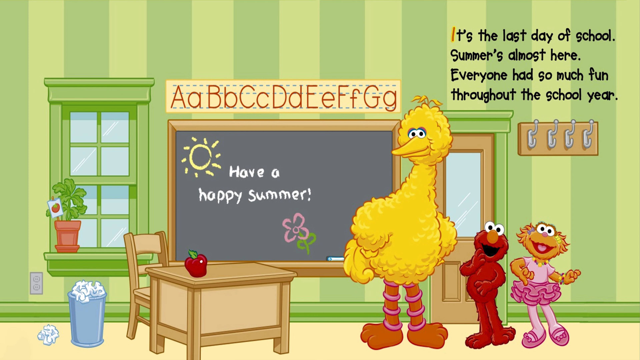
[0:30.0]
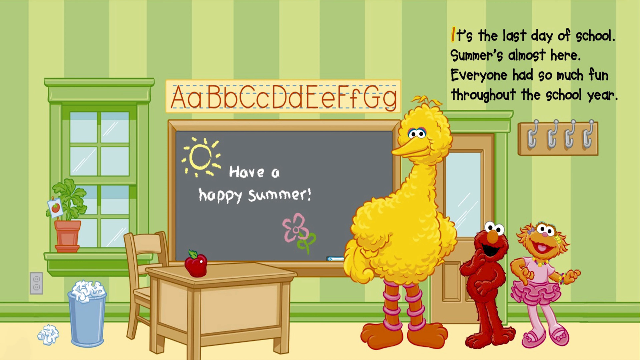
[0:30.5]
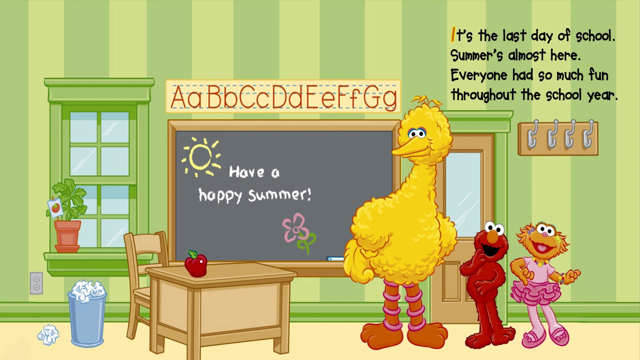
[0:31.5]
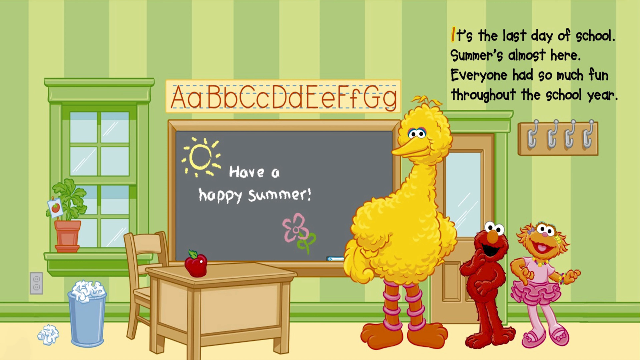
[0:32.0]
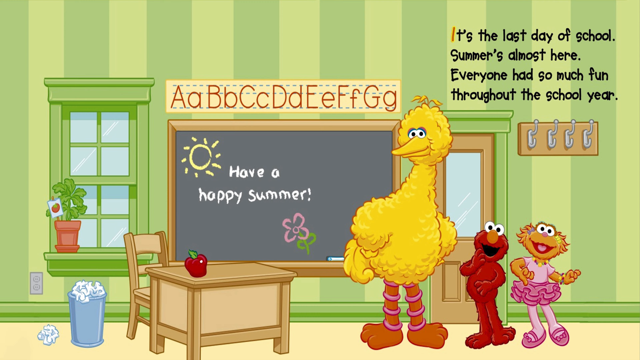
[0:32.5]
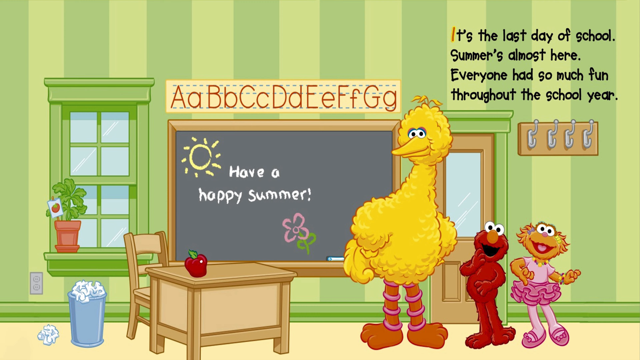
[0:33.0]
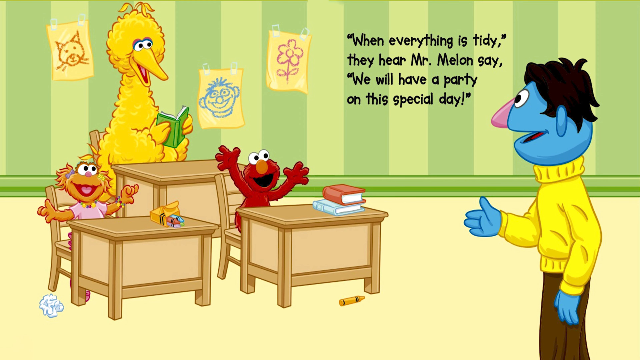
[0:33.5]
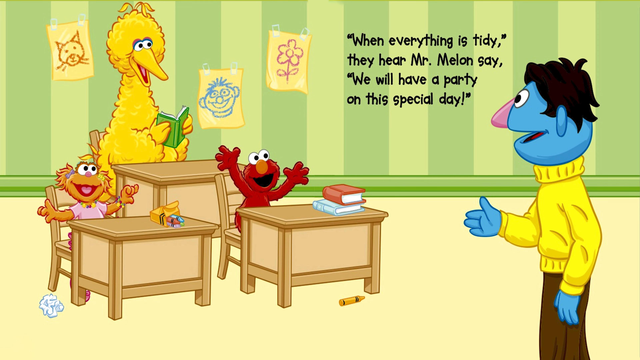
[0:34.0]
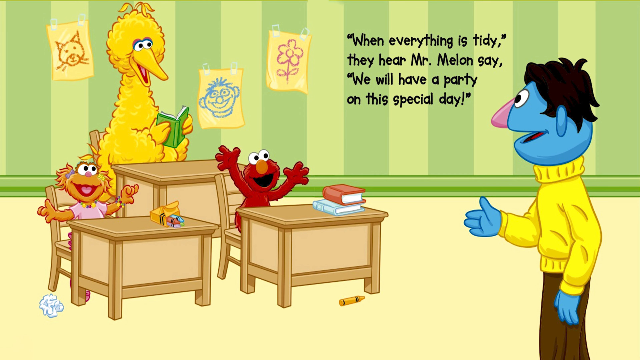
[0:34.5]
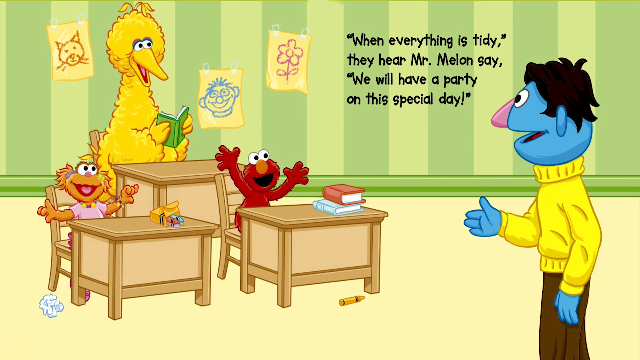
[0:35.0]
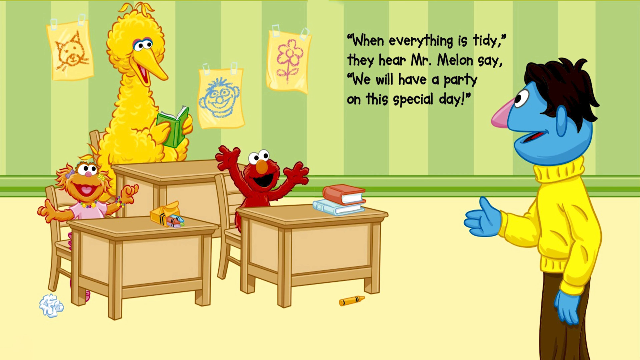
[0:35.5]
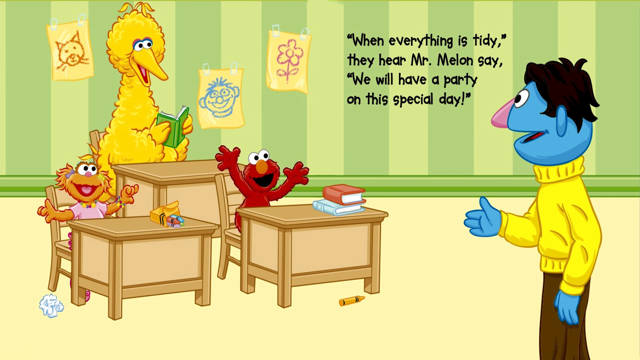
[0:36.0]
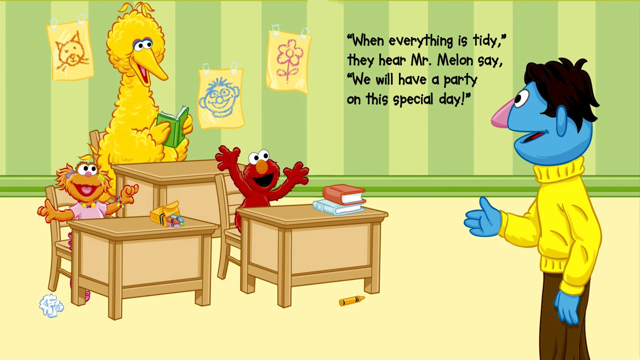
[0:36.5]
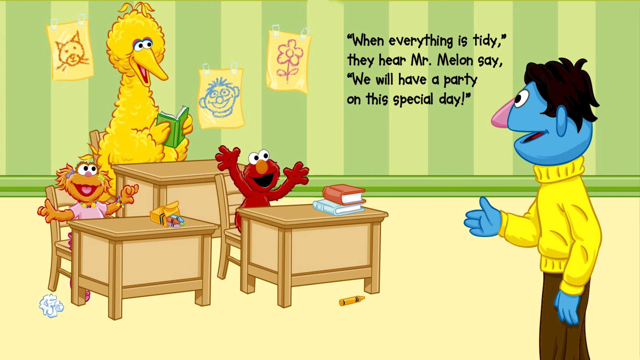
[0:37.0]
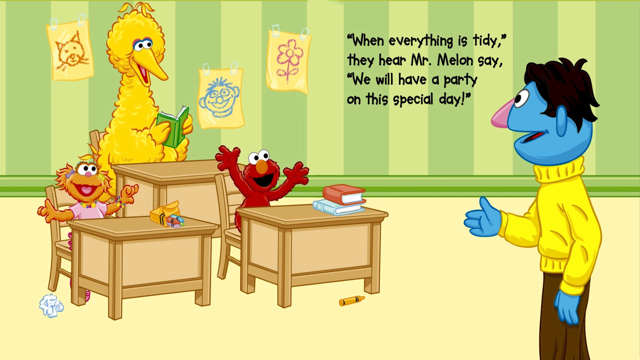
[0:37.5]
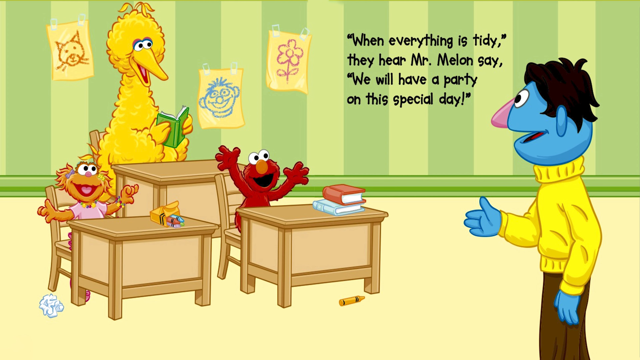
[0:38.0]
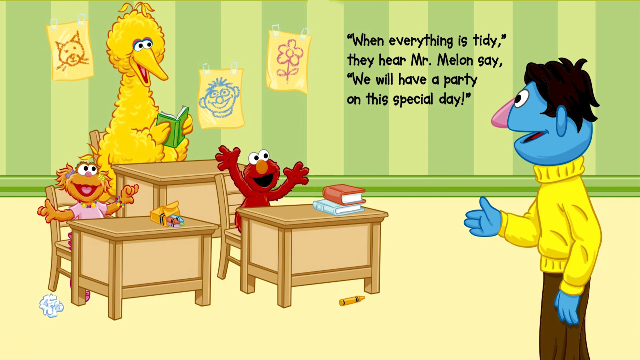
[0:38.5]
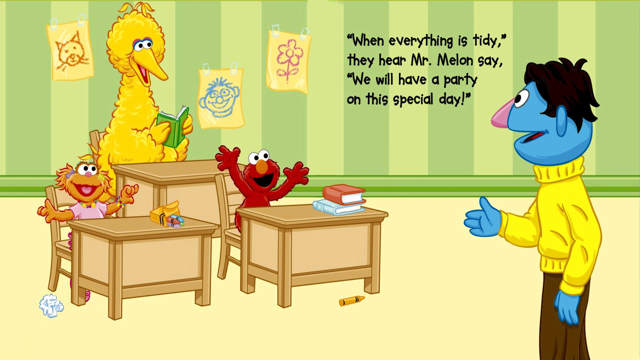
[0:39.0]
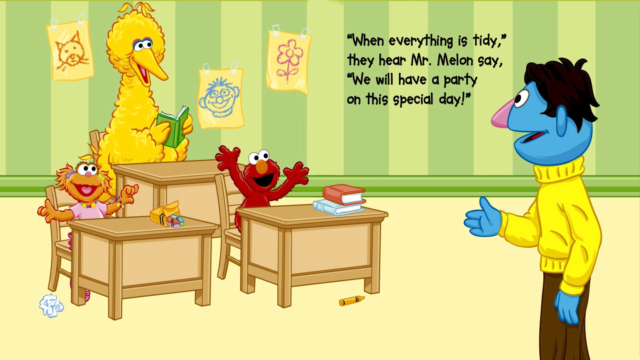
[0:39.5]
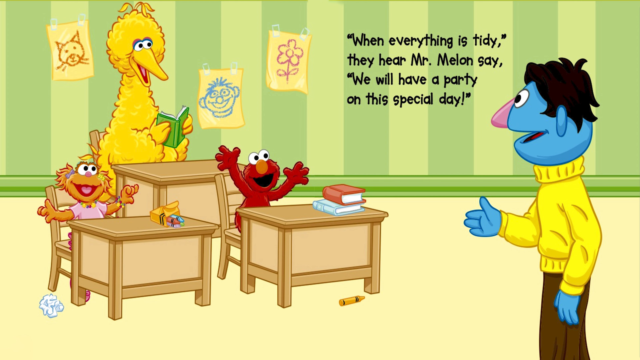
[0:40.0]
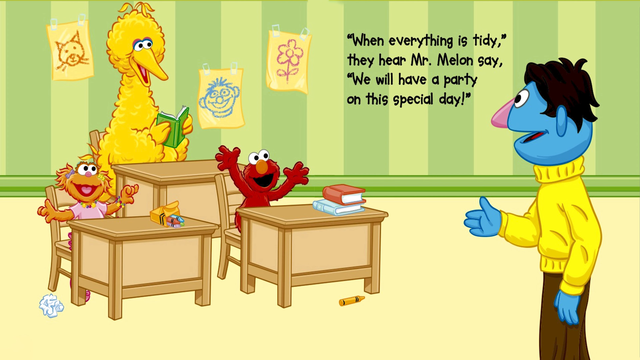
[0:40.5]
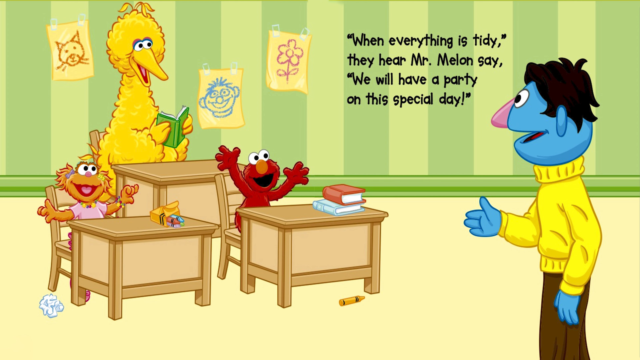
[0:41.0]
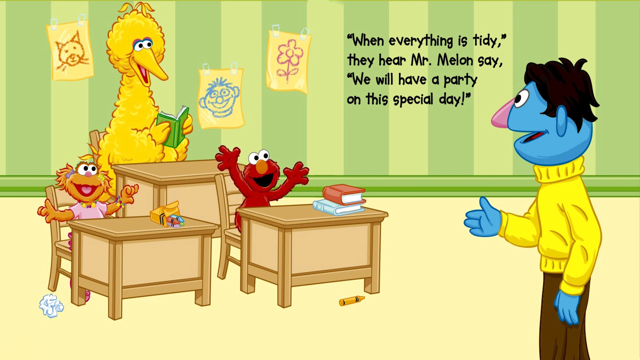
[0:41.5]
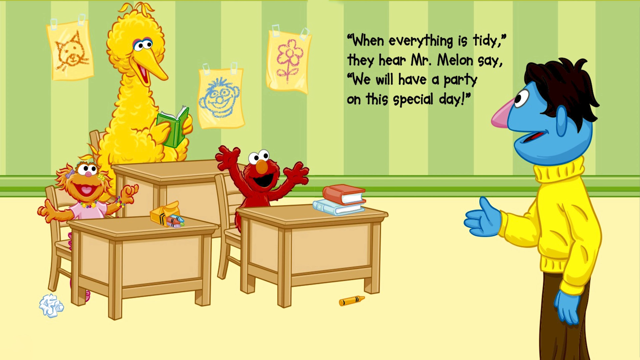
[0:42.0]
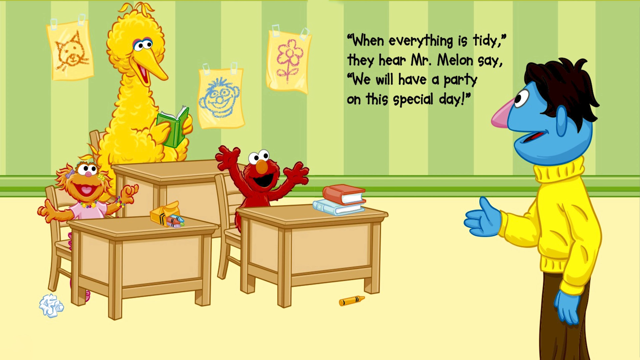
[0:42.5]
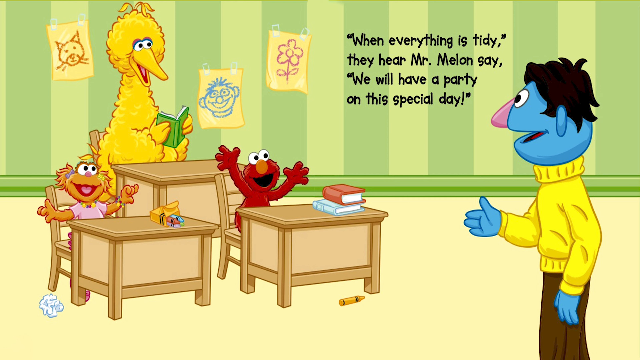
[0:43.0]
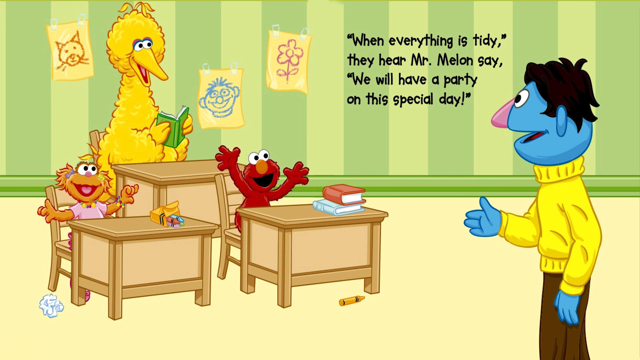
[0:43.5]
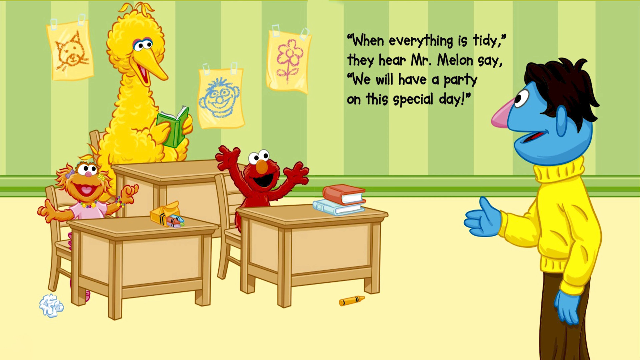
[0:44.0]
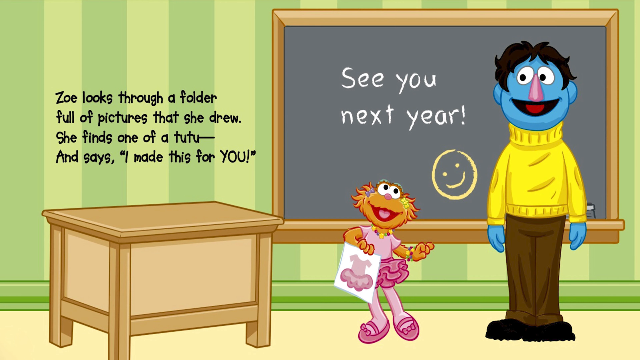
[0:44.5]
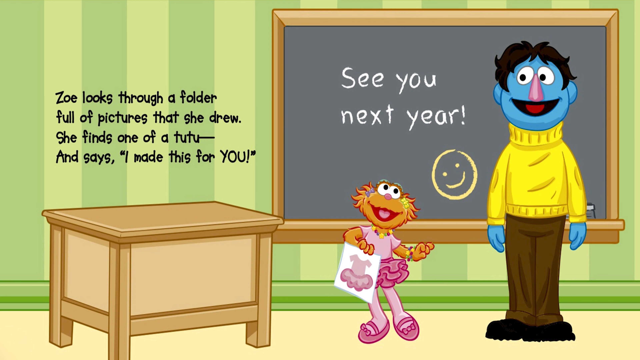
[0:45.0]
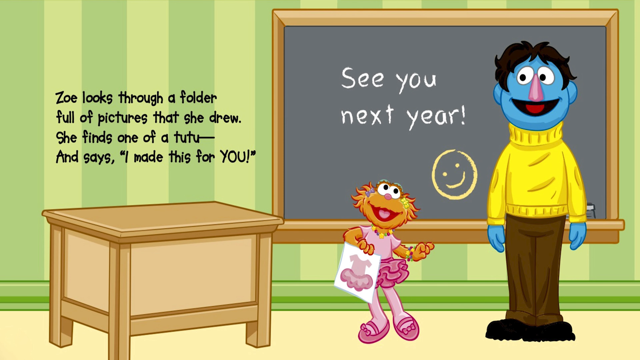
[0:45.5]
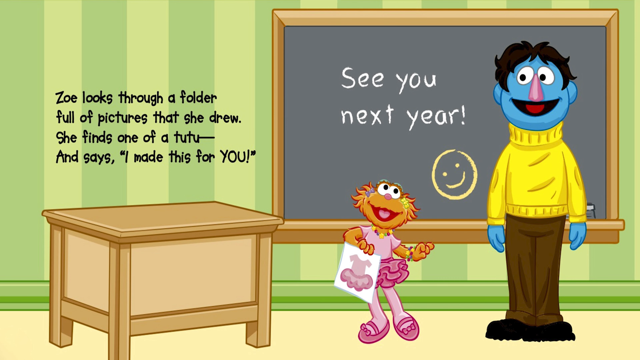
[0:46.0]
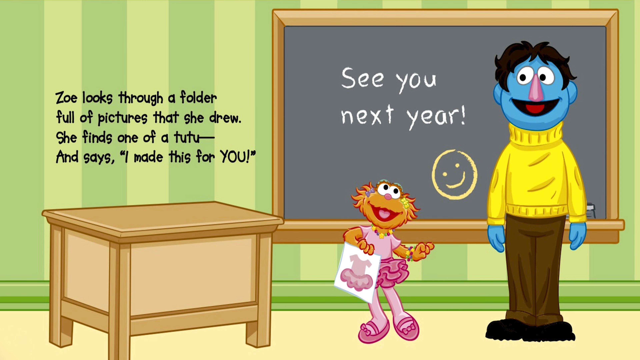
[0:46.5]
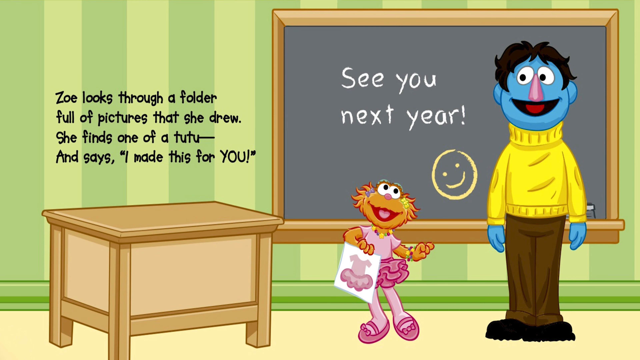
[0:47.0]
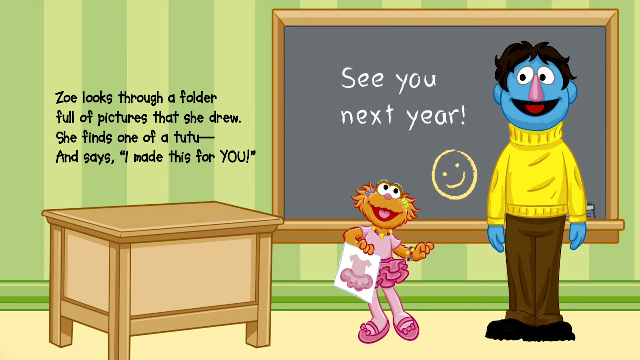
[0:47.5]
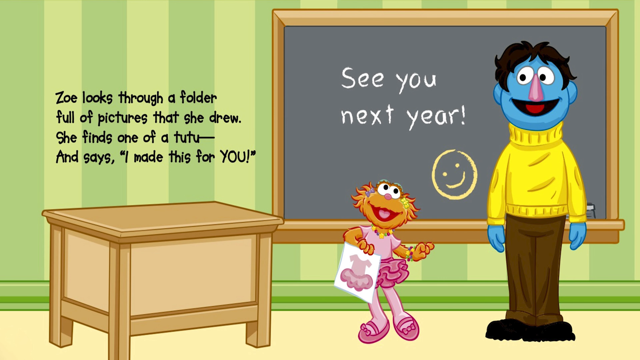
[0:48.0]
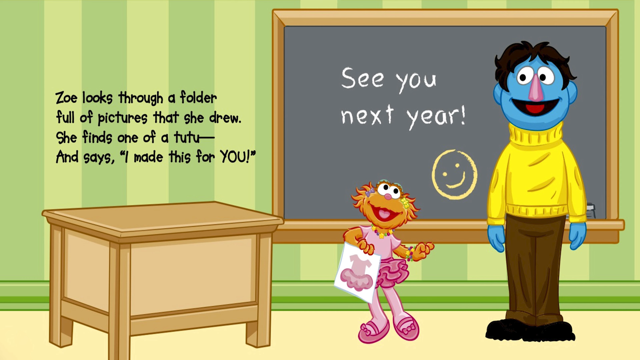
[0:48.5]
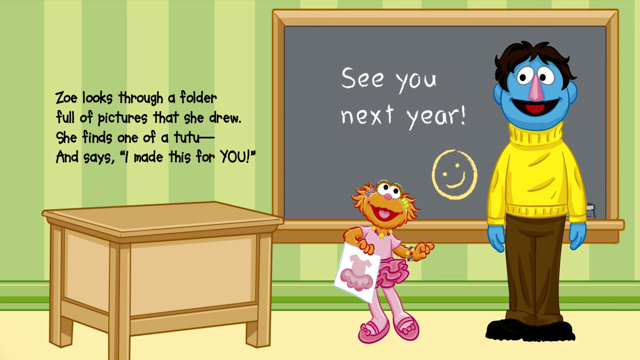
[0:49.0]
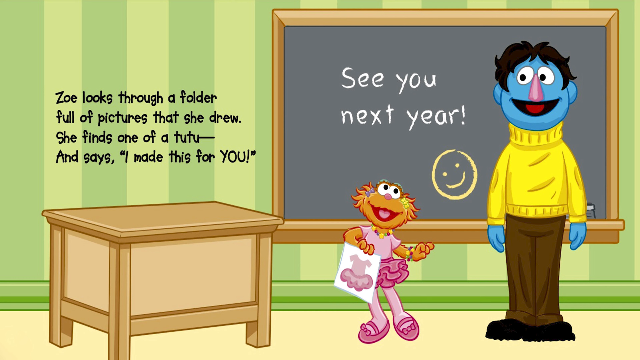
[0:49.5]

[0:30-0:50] Sesame Street characters appear to be in a school classroom. A teacher, colored blue, stands in front of a chalkboard that says "See you next year." Writing on the wall reads "It's the last day of school. Summer's almost here. Everyone had so much fun throughout the school year," which rhymes. An apple is on the teacher's desk. Above the chalkboard are some letters of the alphabet, such as A, B, C, D, E, F, G, in both uppercase and lowercase. The wall is green in two shades, in stripes: one looks like a true green and the other looks like a yellowish green. There is also a window in the wall. The characters look happy.